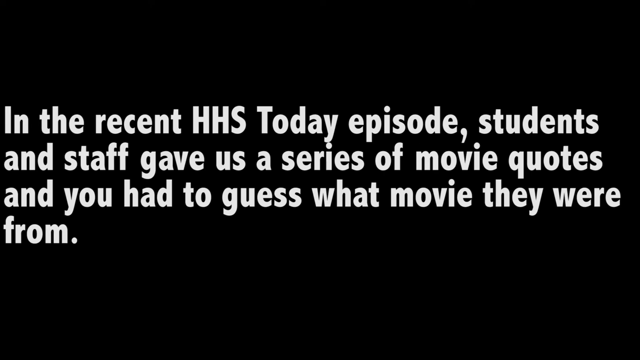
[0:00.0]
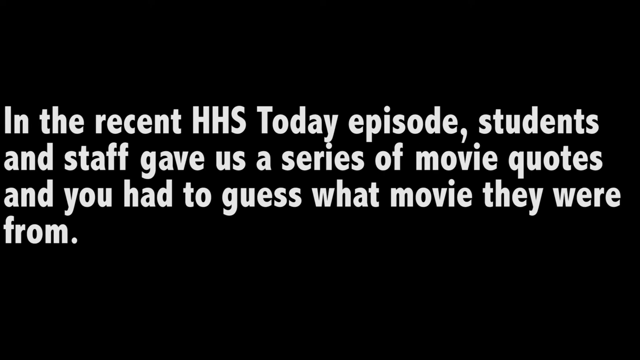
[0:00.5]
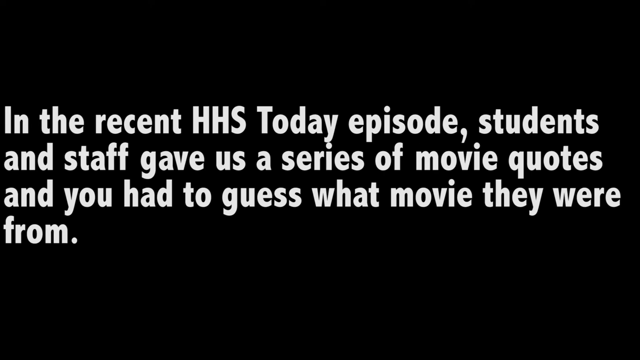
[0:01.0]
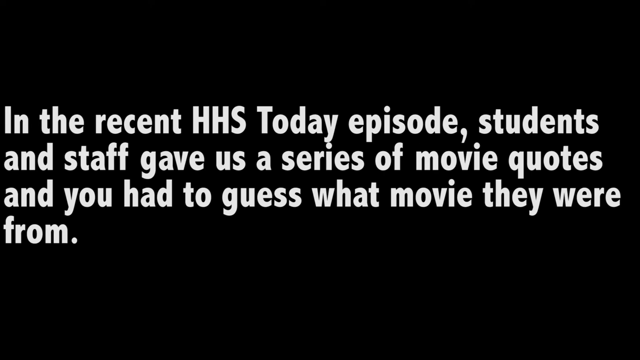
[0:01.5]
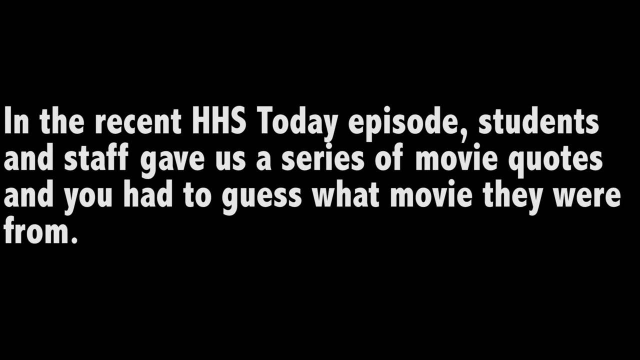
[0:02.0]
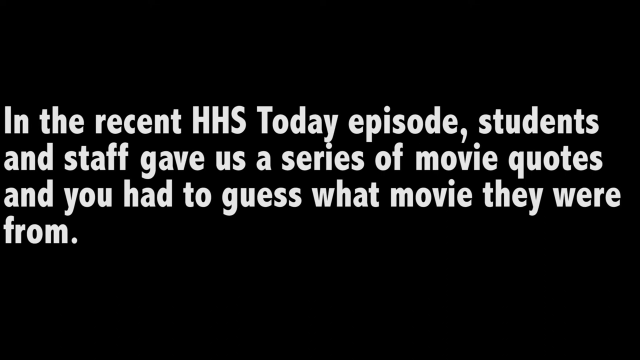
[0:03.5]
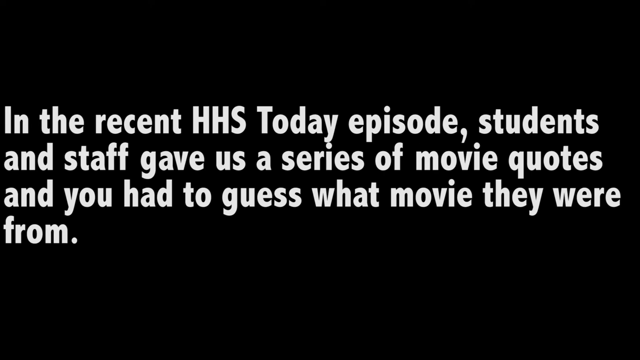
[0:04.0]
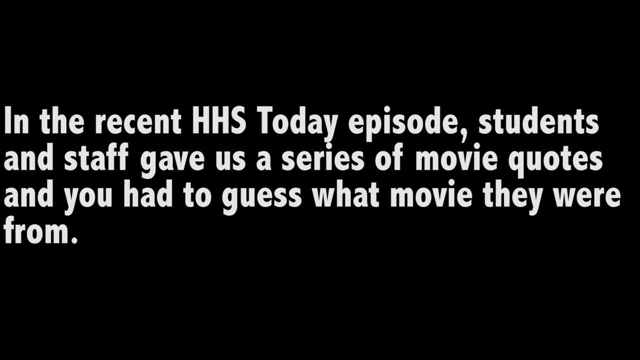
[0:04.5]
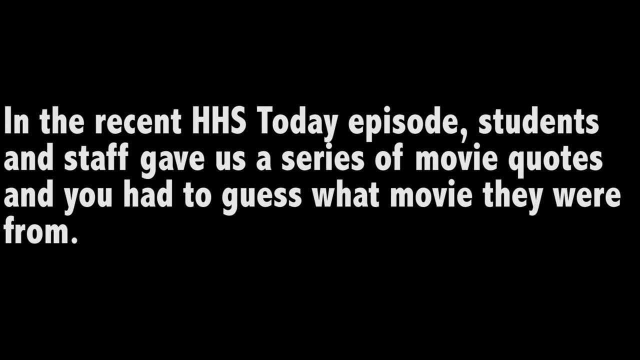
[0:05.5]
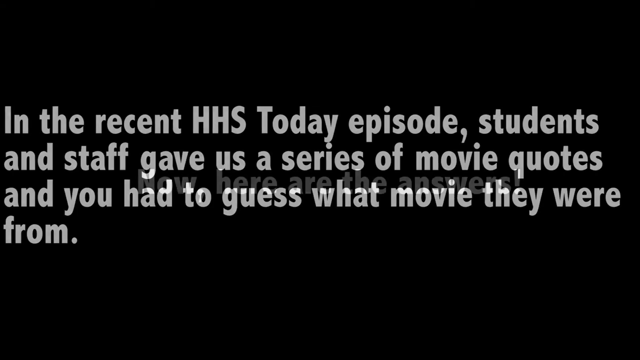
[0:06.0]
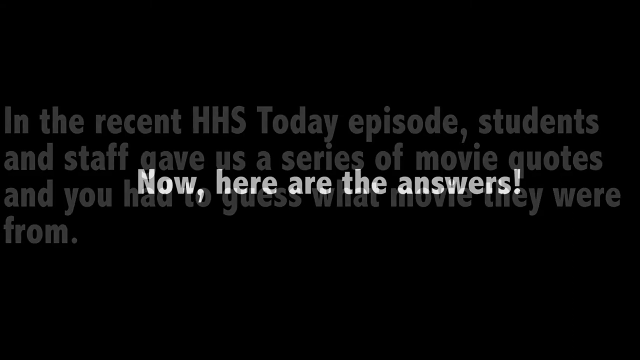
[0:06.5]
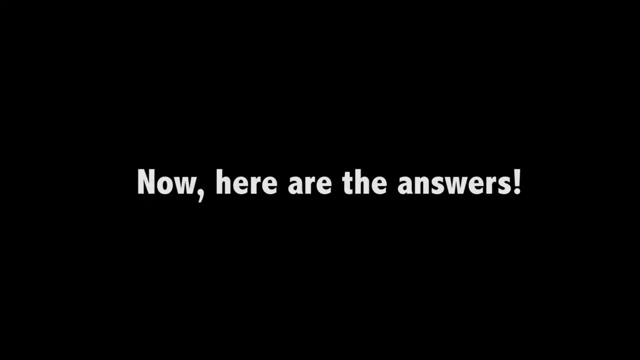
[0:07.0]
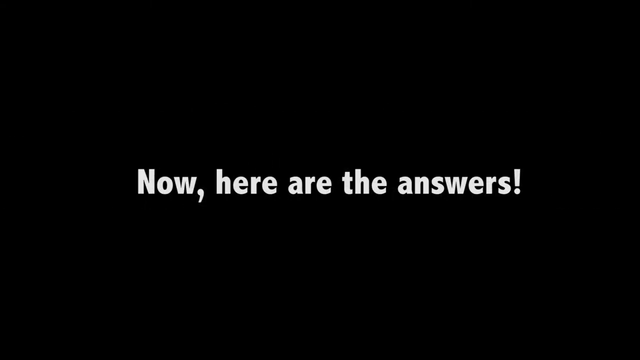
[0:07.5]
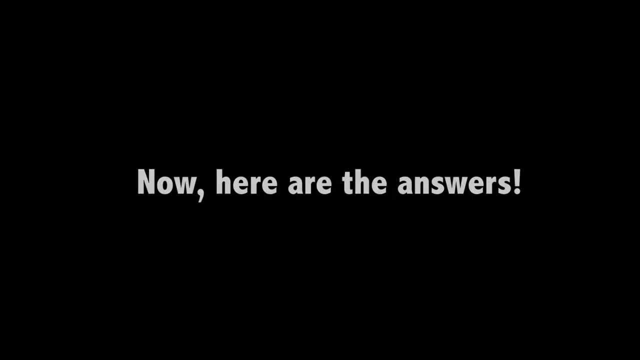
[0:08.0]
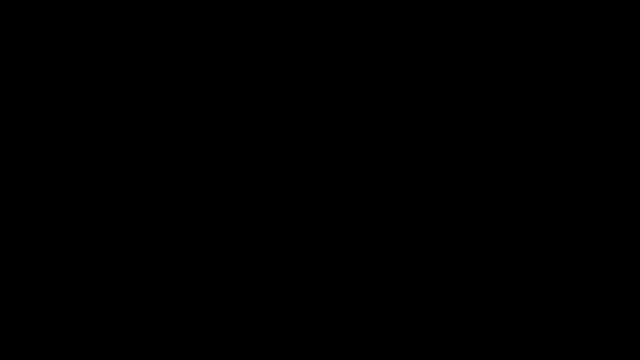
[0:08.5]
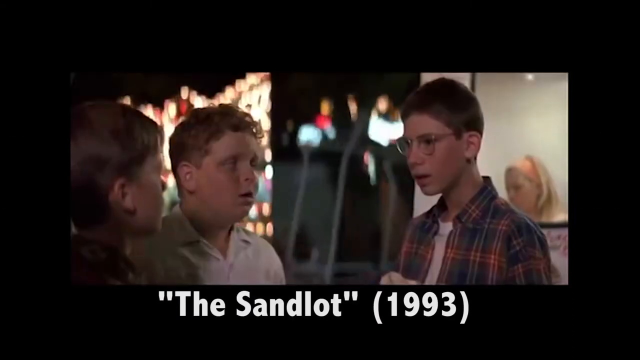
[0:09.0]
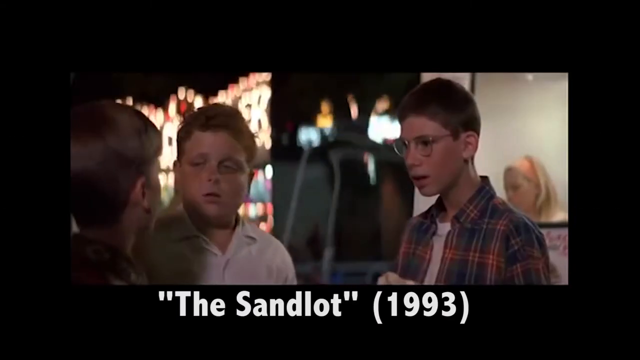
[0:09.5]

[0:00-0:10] White writing on a black background reads: "in the recent HHS Today episode, students and staff gave us a series of movie quotes, and you had to guess what movie they were from." The scene then changes to three young boys standing beside each other, seemingly conversing at an amusement park, with the title "The Sandlot 1993" at the bottom of the screen. One boy wears glasses and a colourful shirt and has dark brown hair. Beside him is a boy in a white shirt with light brown curly hair. In front of him is a boy in a red collar shirt who is facing him; he also has dark brown hair.